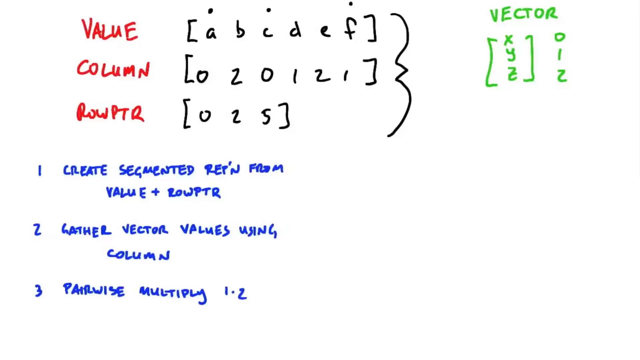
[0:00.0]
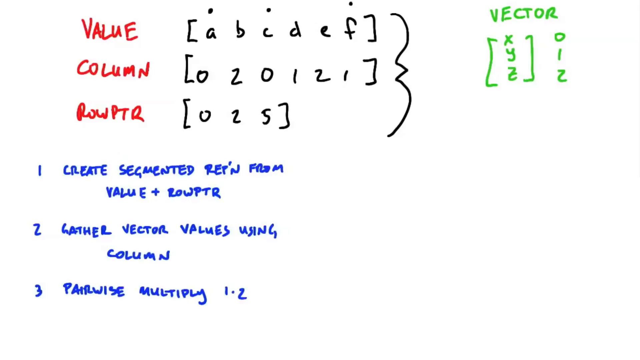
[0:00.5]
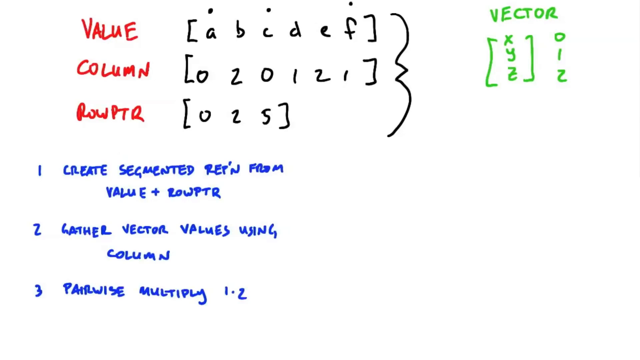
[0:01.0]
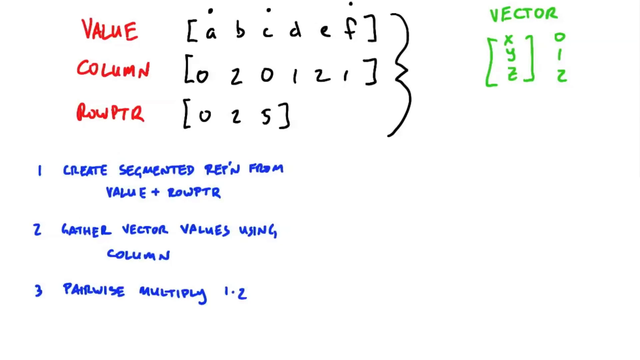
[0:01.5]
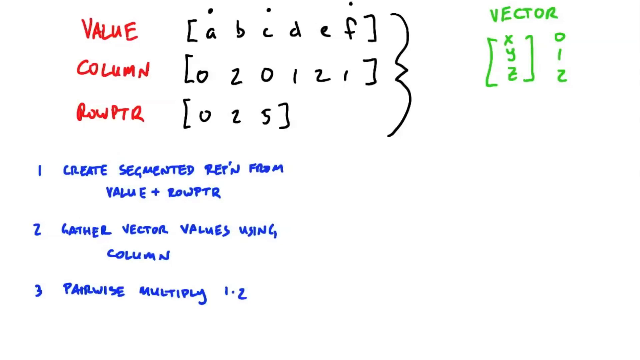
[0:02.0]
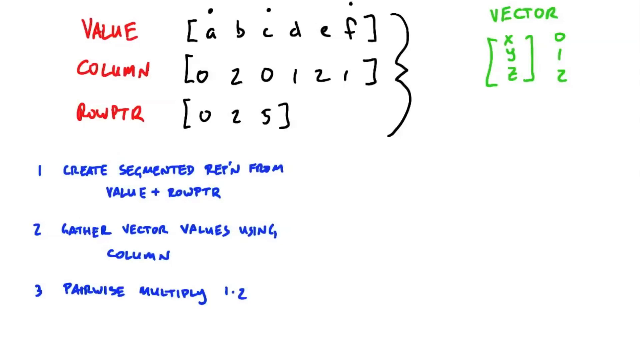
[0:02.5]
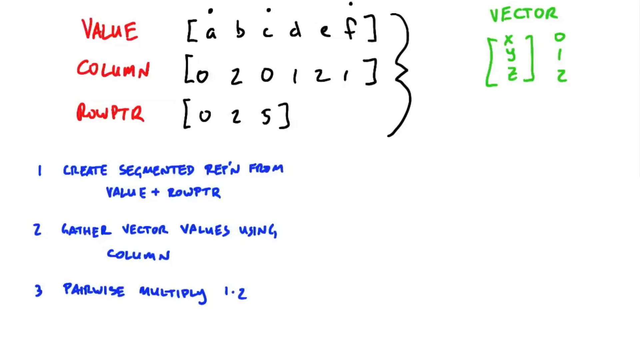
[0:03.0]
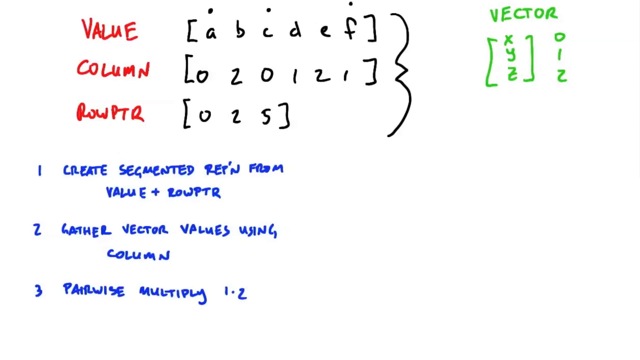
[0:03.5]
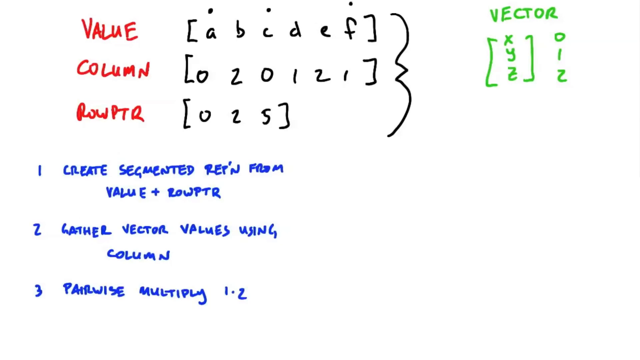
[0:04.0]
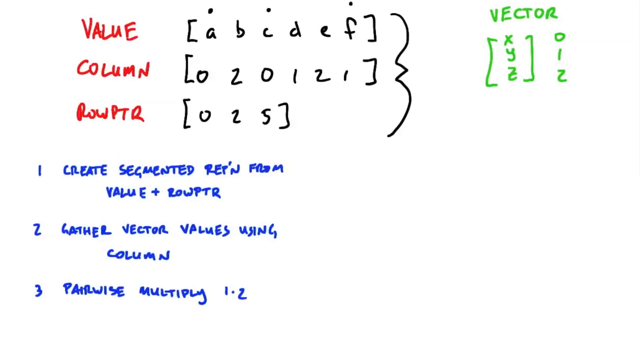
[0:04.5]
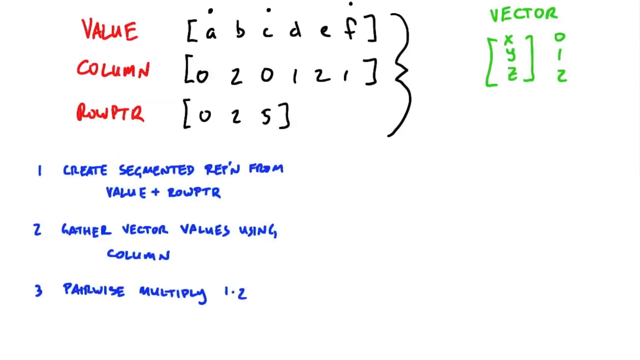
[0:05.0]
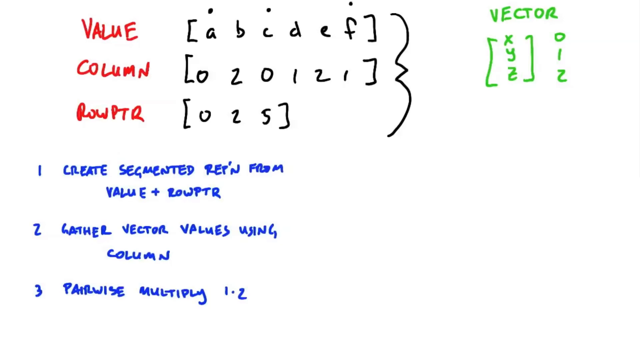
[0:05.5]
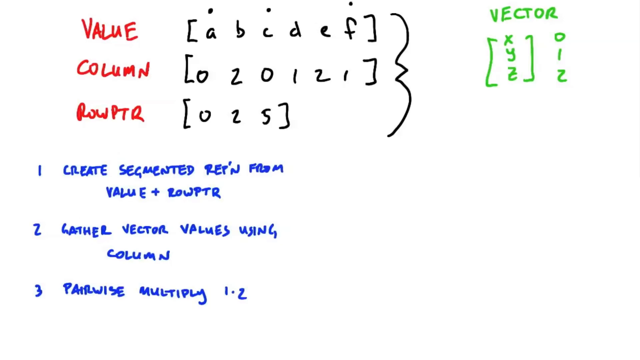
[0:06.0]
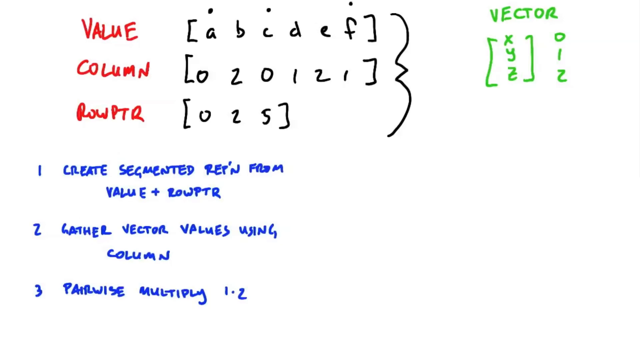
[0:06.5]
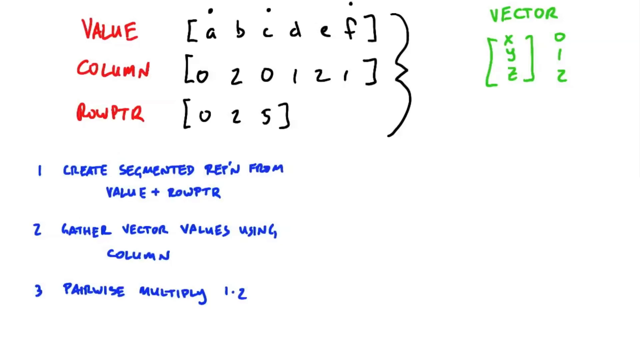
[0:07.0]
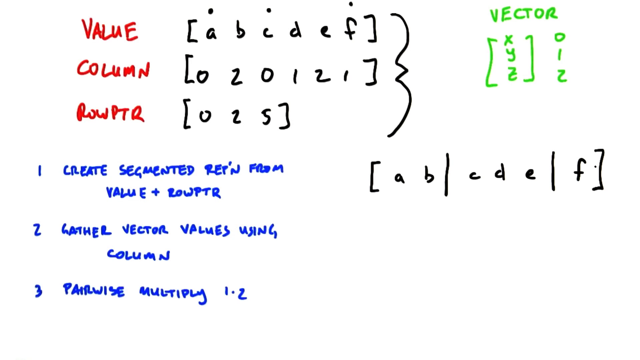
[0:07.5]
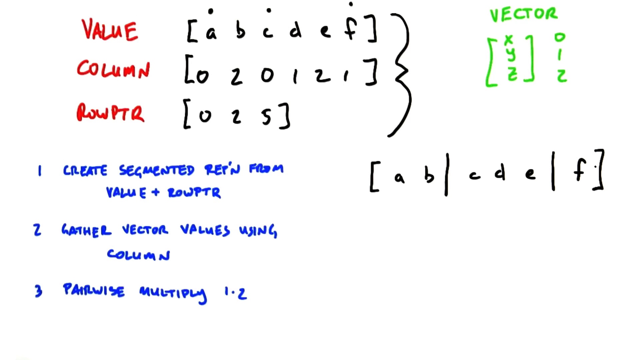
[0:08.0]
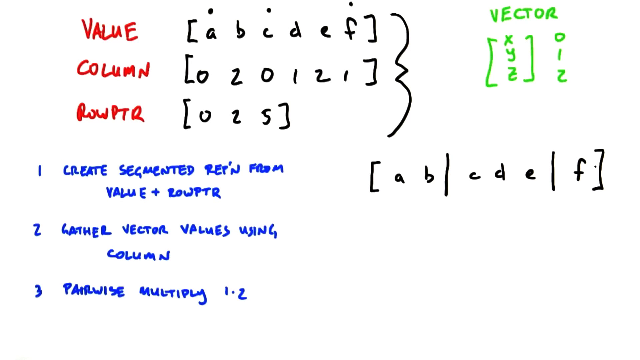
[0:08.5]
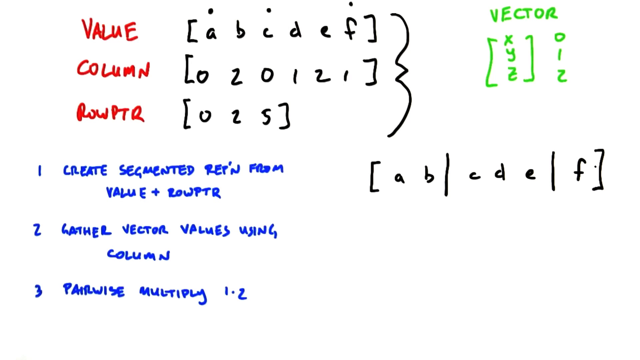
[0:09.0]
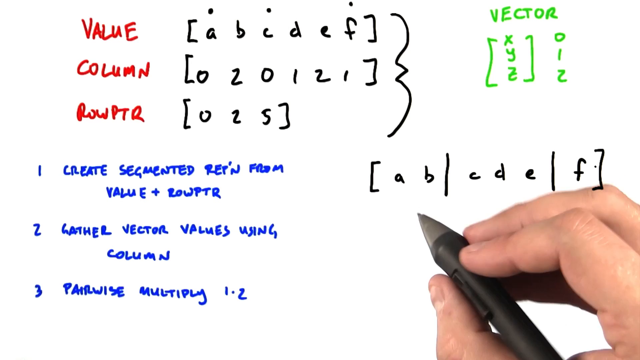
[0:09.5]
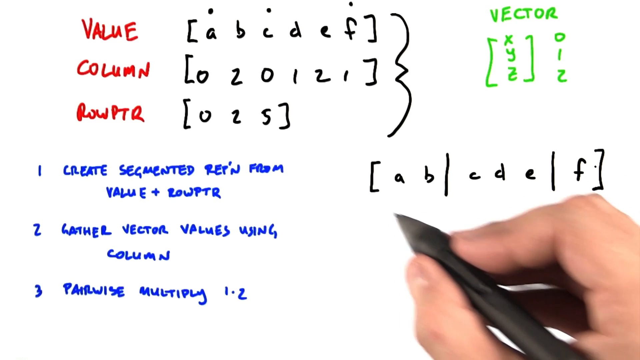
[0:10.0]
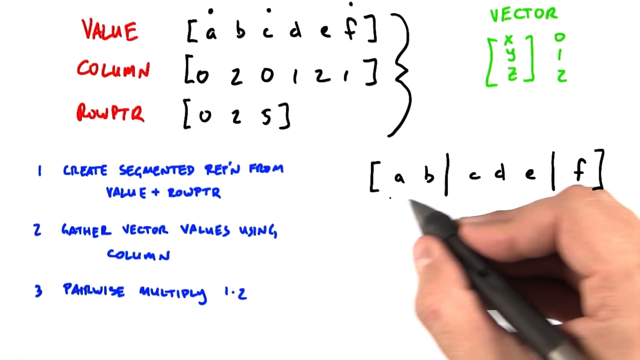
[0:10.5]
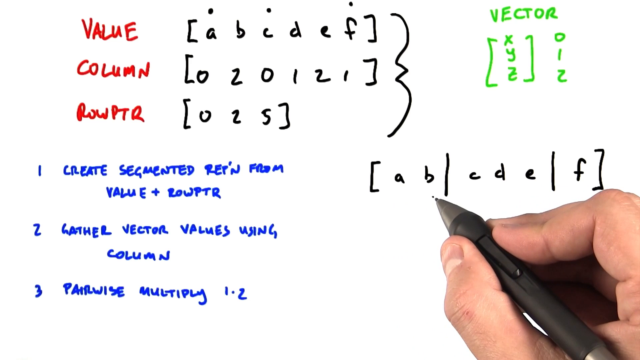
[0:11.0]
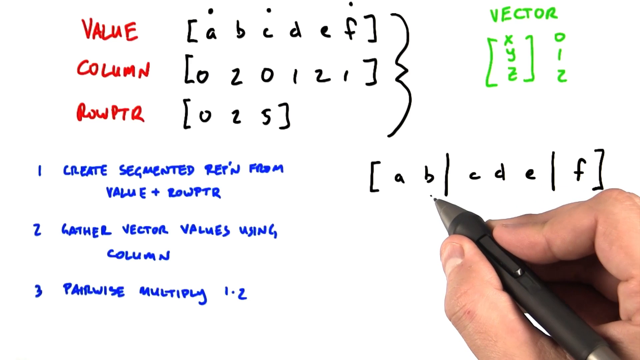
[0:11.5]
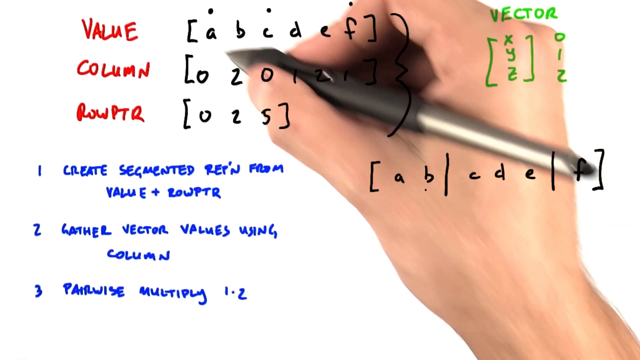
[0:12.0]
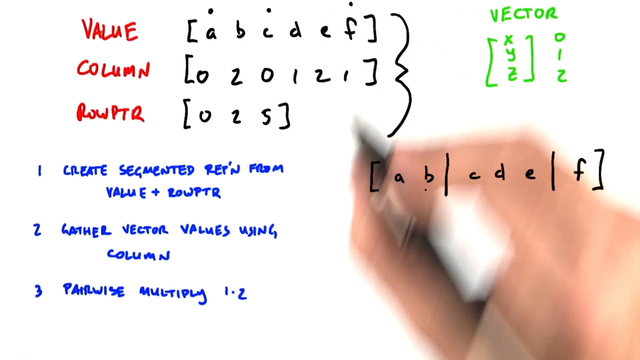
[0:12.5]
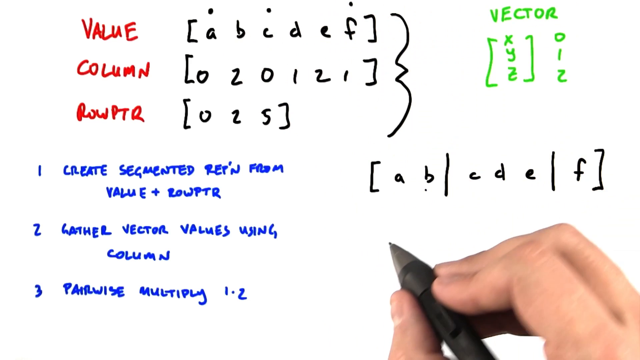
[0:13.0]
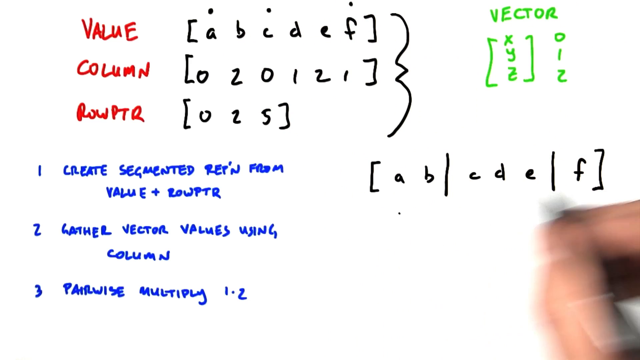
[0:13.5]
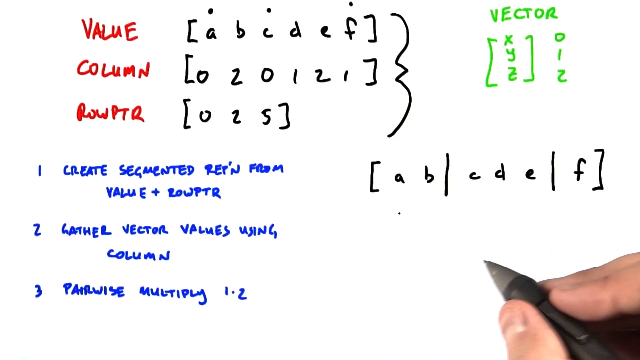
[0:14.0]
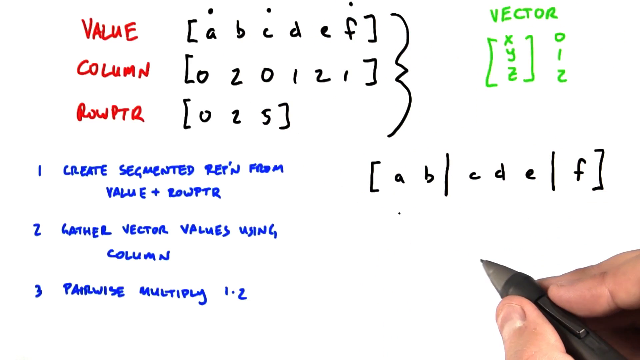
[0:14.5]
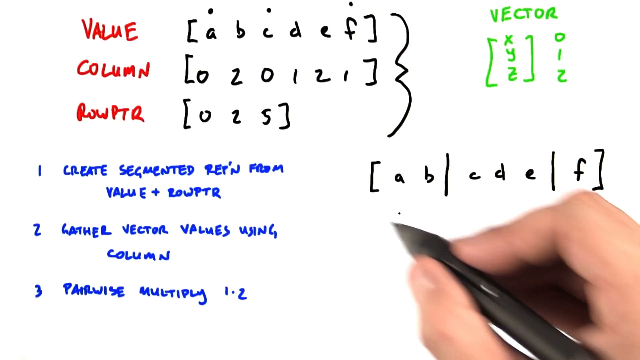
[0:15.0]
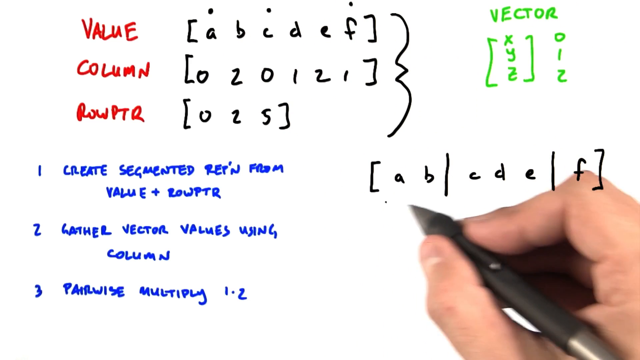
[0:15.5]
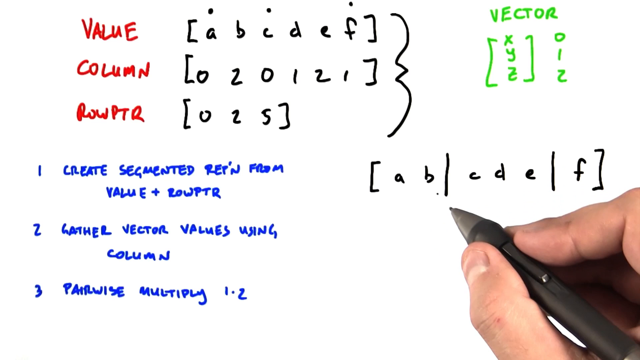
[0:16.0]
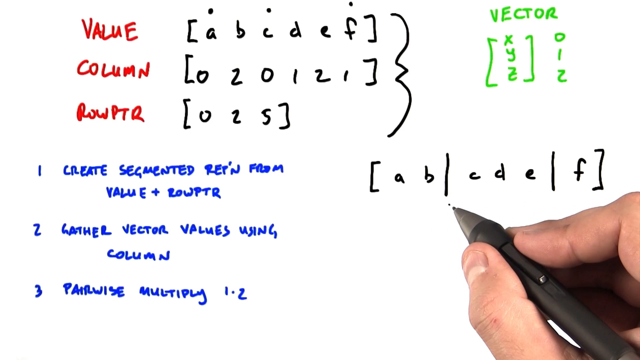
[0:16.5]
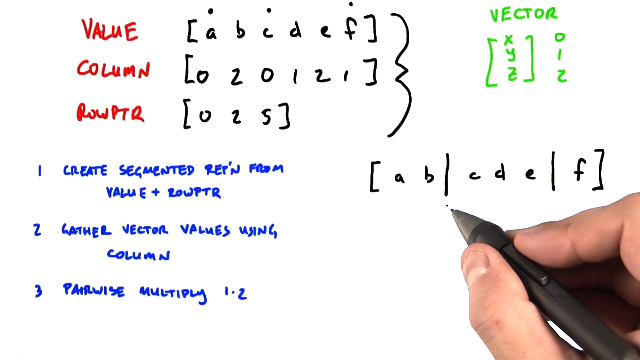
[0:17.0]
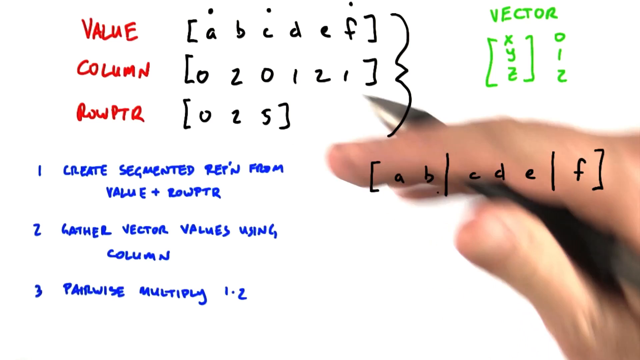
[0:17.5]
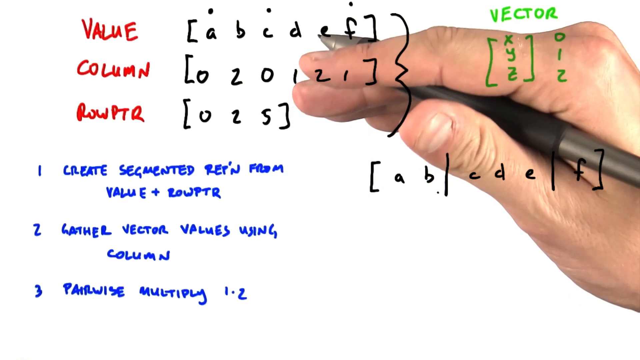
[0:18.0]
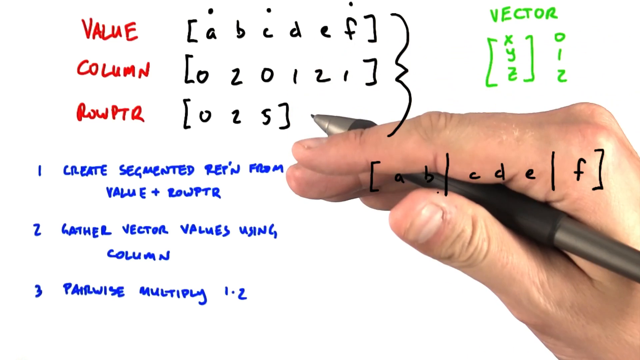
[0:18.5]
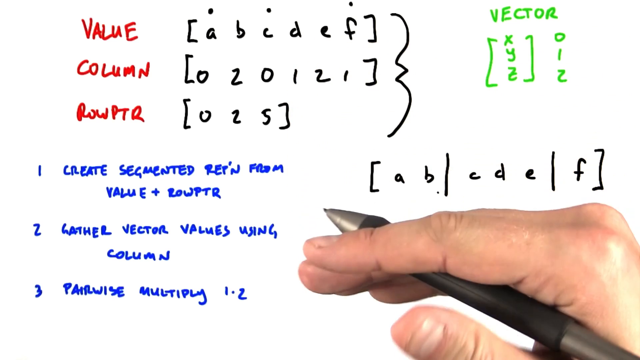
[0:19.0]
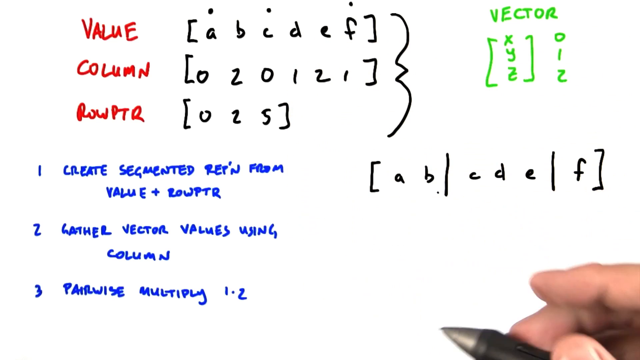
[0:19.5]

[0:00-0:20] Several mathematical setups involving values and columns appear on screen. On the left side, three labels, Value, Column, and Rowptr, are written in red uppercase letters. Next to Value are the letters a, b, c, d, e, f in parentheses and brackets. Directly underneath, written in blue, is a list of three steps explaining what to do: step 1 says "create segmented rep'n from value plus rowptr," step 2 says "gather vector values using column," and step 3 says to "pairwise multiply using number one times number two." On the right side of the screen, to the right of the three labels, is another mathematical setup written in green and labeled Vector. Directly under the Vector label, on the left, are the letters X, Y, Z in parentheses, and to the right the numbers 0, 1, and 2 are written directly across from each letter.